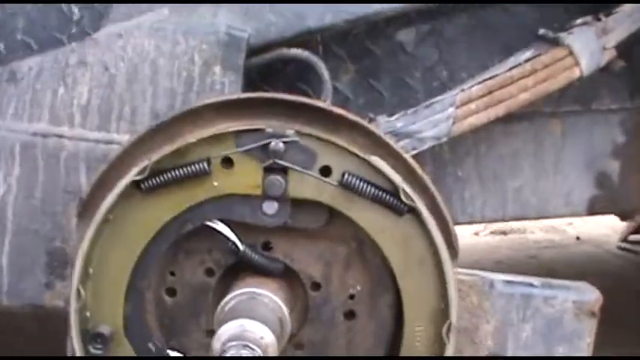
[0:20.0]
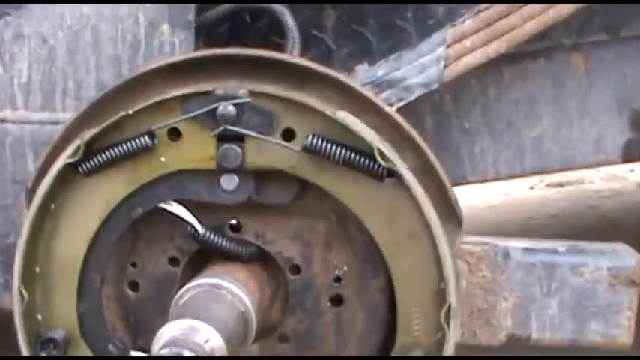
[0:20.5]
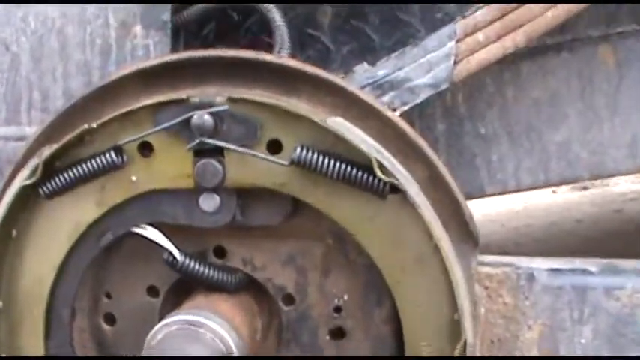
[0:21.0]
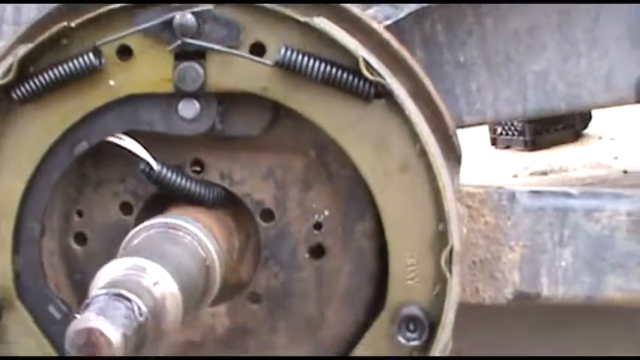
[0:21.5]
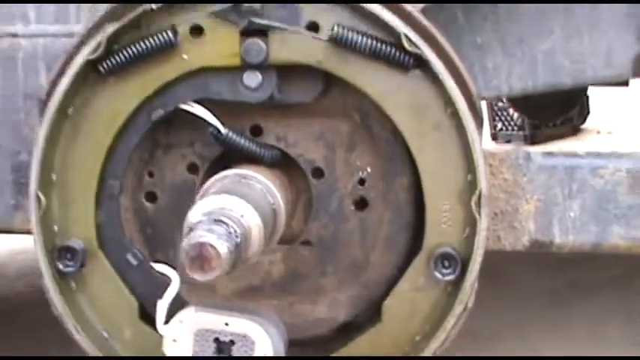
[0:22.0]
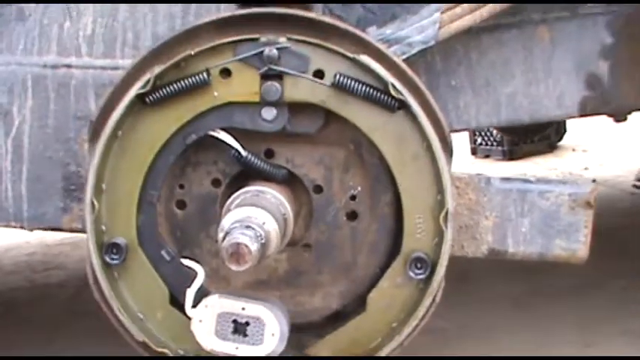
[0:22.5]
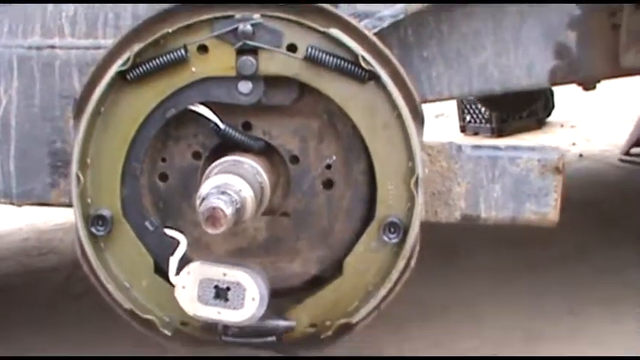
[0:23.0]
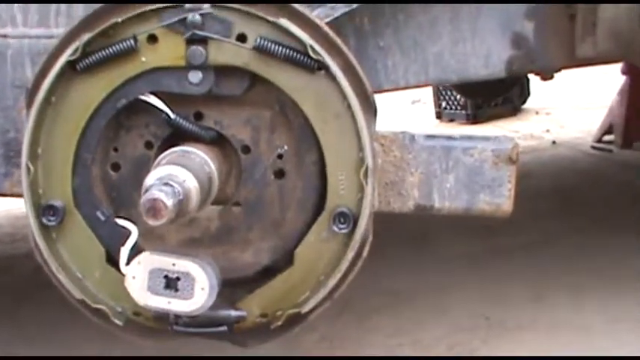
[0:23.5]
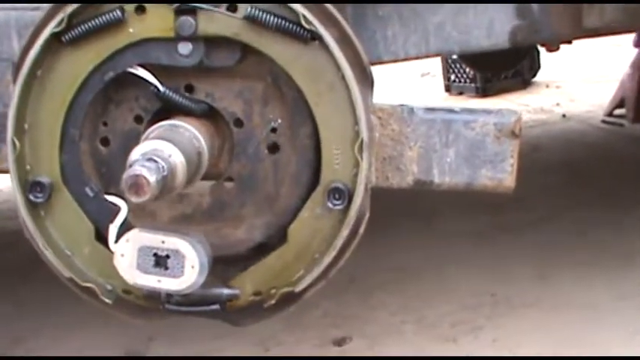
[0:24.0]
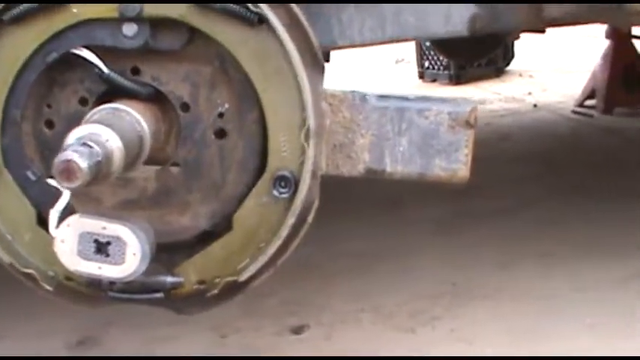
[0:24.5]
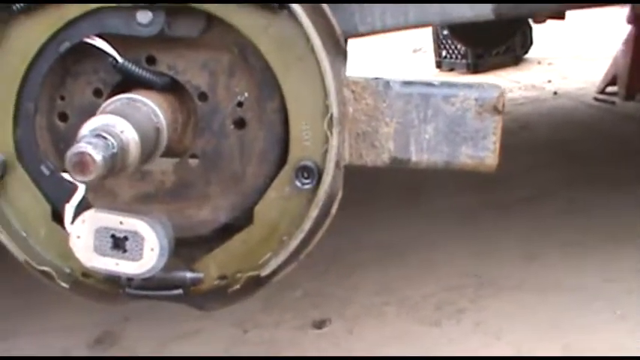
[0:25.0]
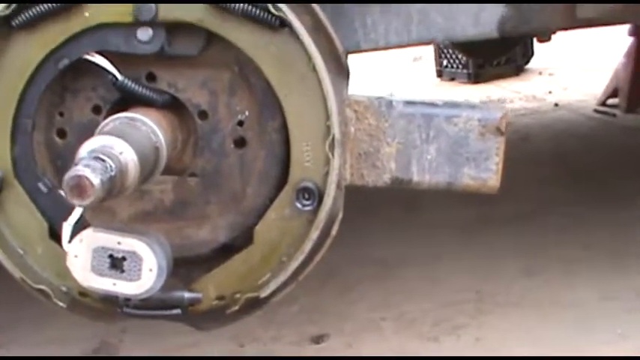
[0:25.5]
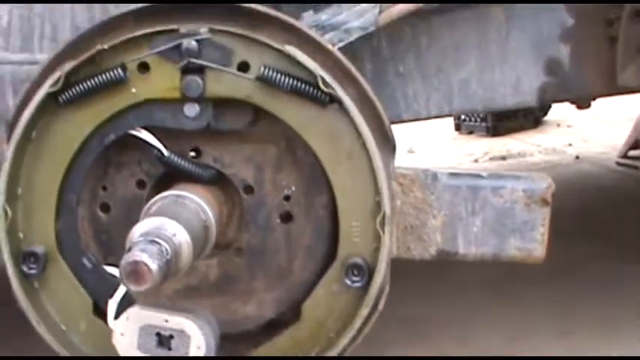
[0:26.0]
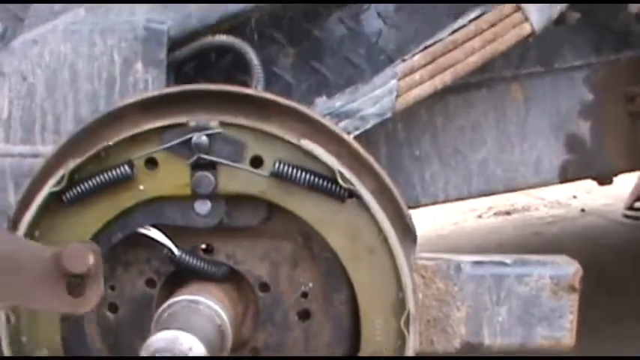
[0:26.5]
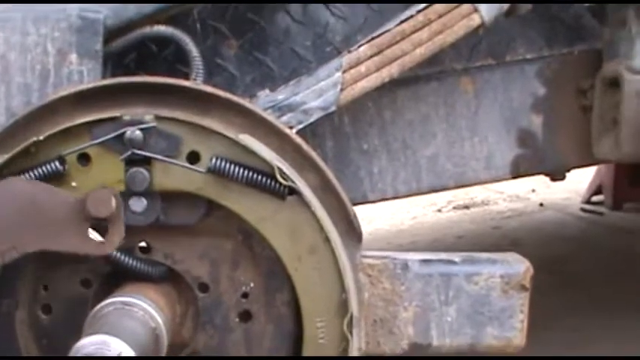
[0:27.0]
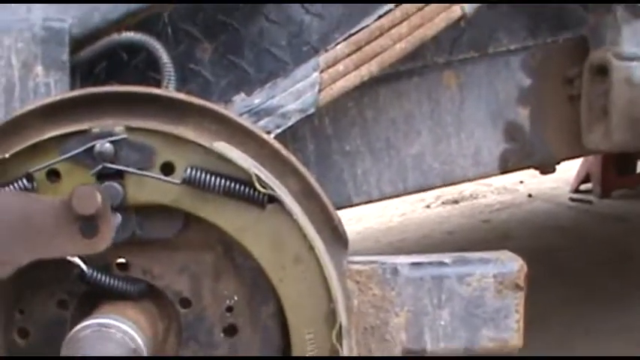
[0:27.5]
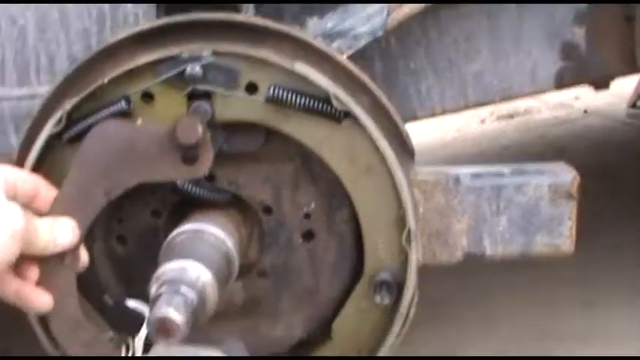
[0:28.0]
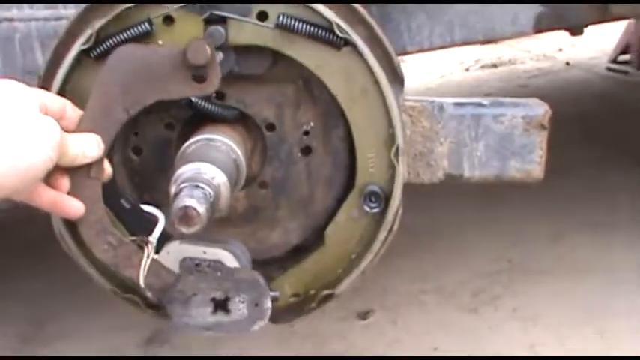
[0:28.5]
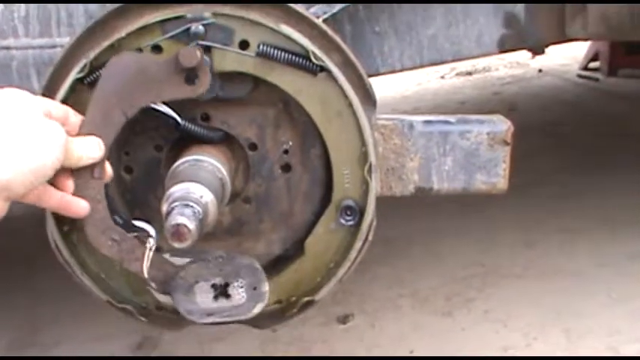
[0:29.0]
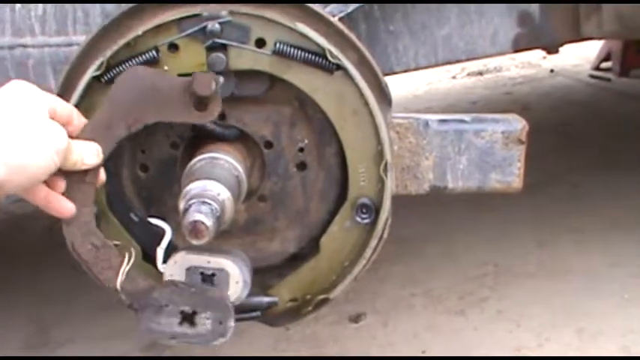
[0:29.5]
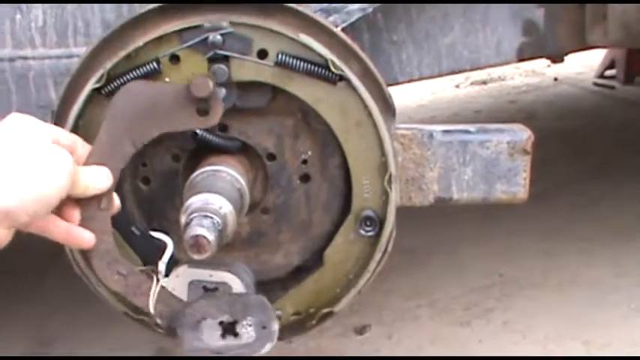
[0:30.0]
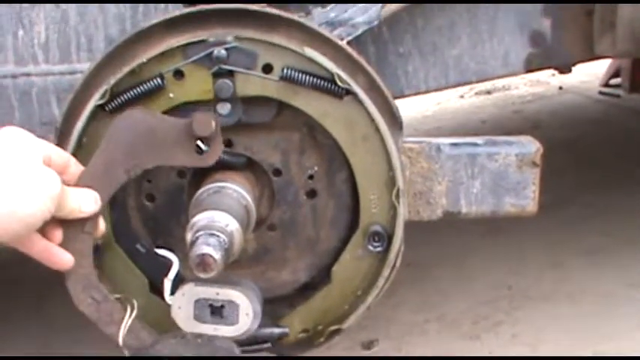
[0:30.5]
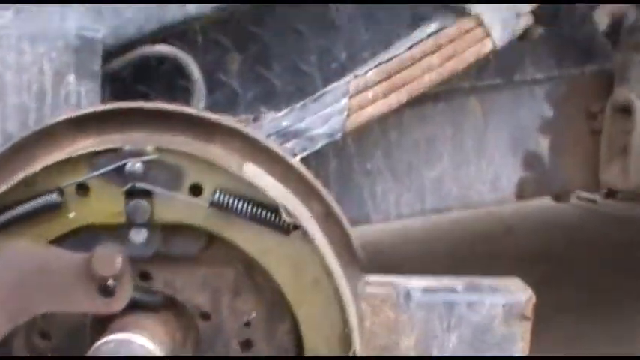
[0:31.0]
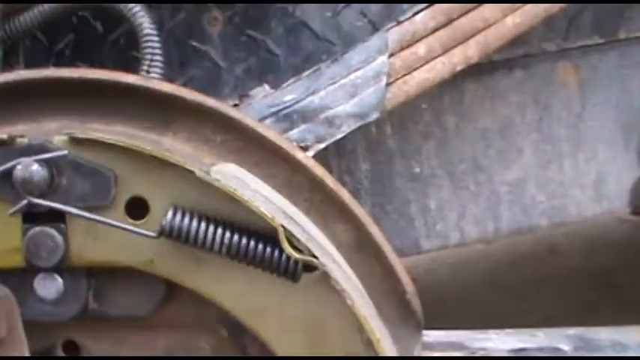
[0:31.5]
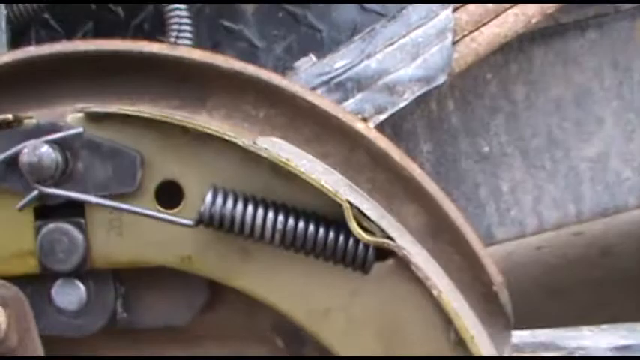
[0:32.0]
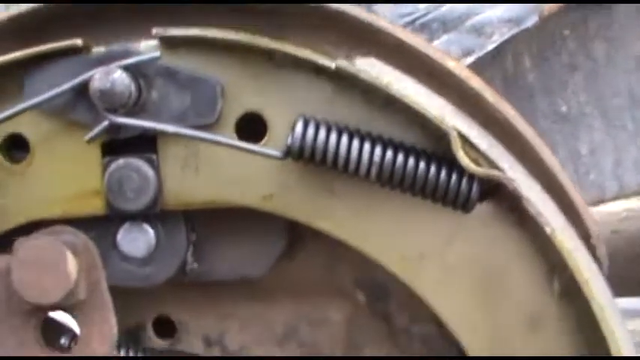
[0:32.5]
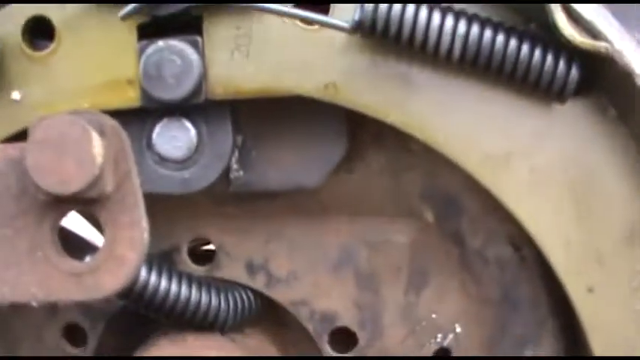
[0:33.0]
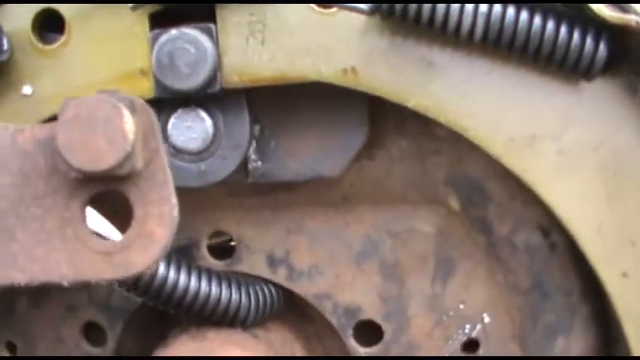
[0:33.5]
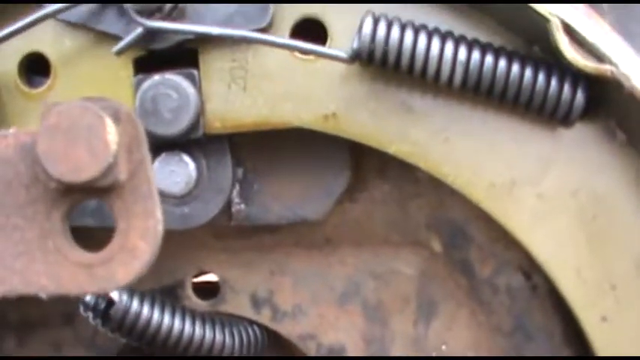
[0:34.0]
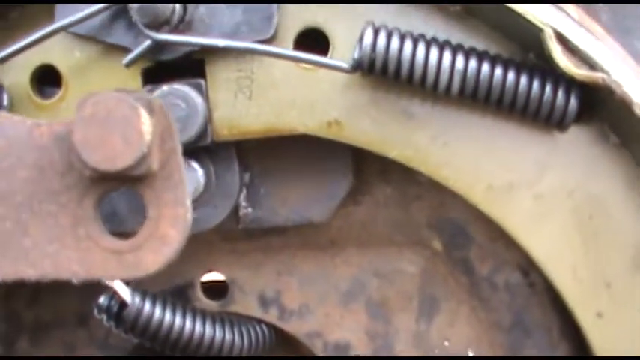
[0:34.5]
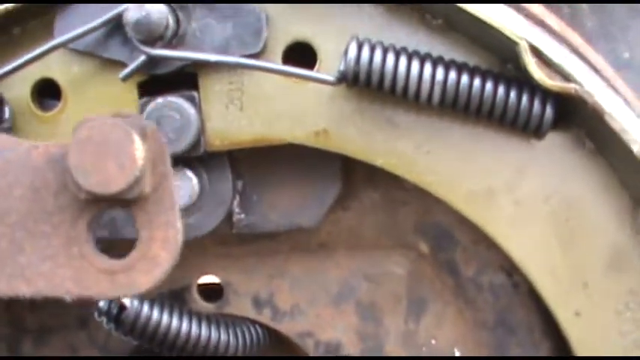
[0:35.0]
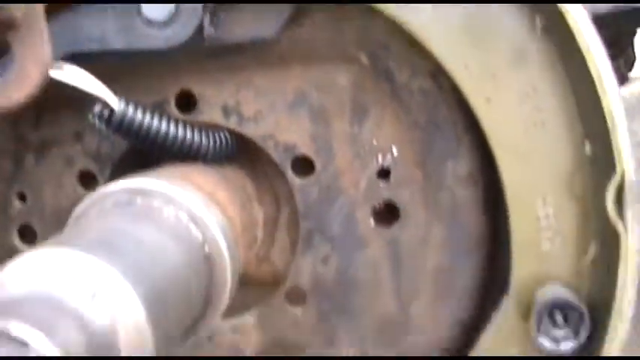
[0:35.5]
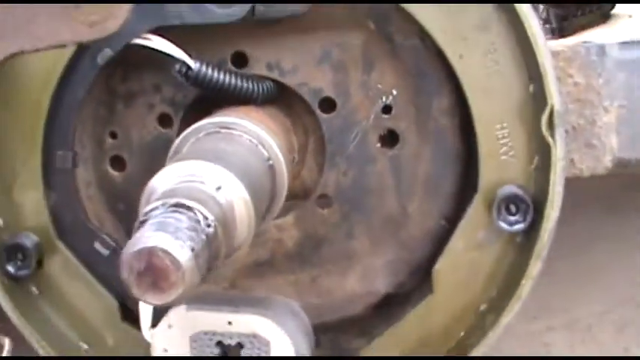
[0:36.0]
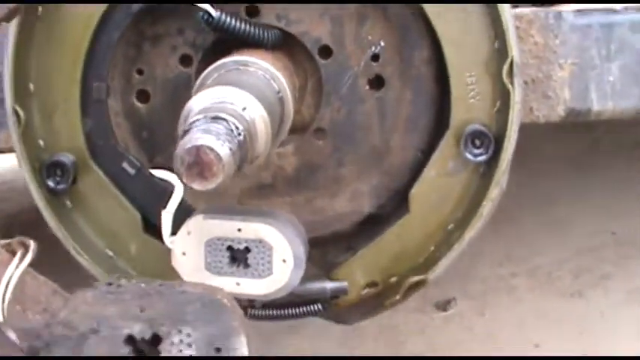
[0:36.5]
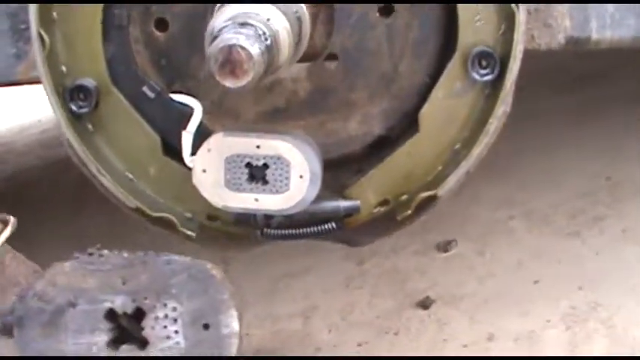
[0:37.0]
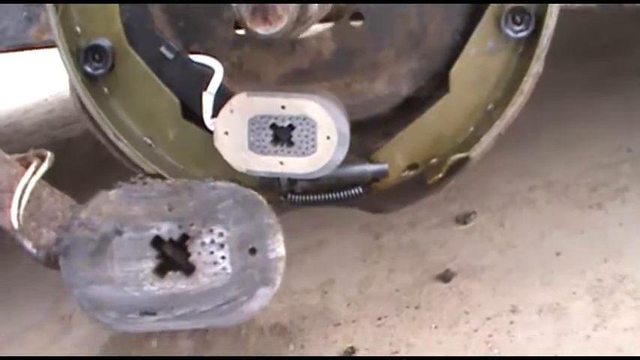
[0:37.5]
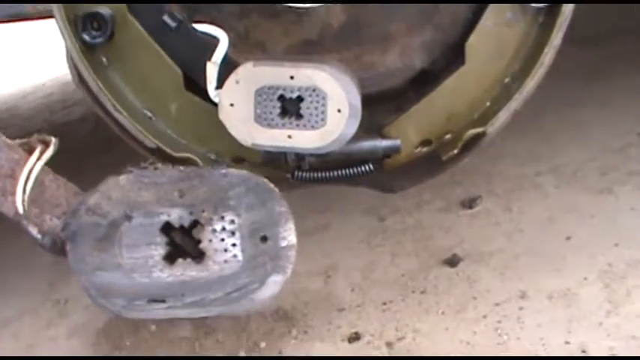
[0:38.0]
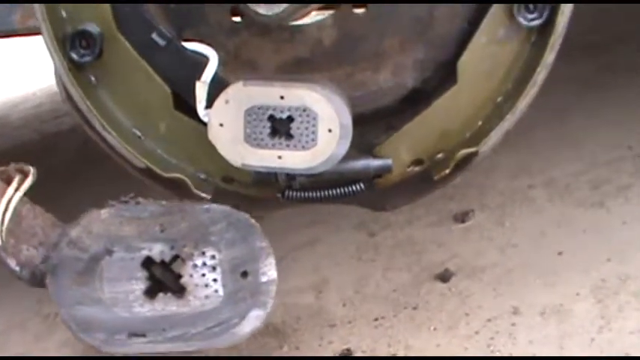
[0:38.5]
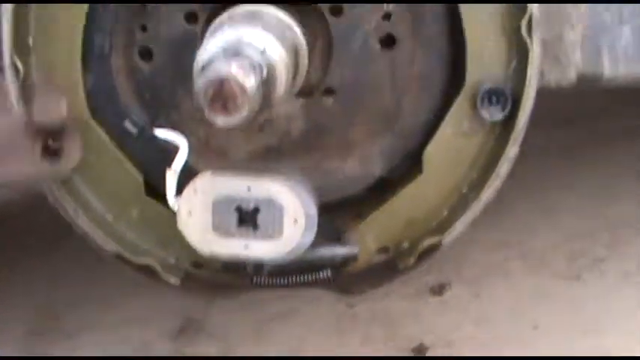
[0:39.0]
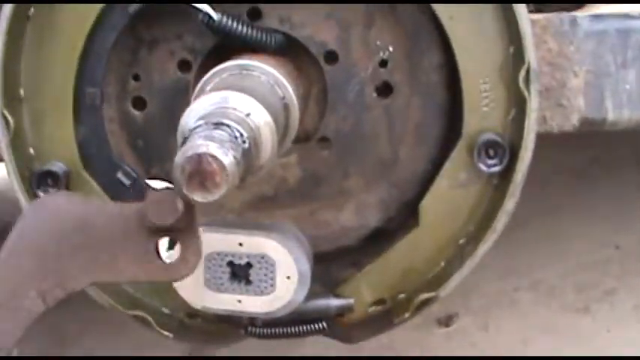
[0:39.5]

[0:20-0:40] The camera is in close on the circular part where the tire is attached. Two springs are on top, one going left and one going right, and the bottom is cut off. Some metal goes up to the right, with metal behind it for the framing. The camera goes in closer toward the spring, then the centerpiece where the tire slides on, then backs away. Underneath and to the right in the distance, the bottom edge of a black crate is visible. Some wiring comes out above the round spot where the tire goes, and some goes down. A little square box is connected to the one underneath. Coming in from the left side, the old piece is turned back and forth, and the camera zooms in on the springs, bringing in the corner of the old one to show what they look like side by side. The camera then backs out a little, showing the bottom where the square is. On the one on the tire, the wiring is white. On the one being held, with the rusty part, the wiring is white but has crud on it, and the square part is dirty, scraped up, scuffed up, black and grimy.